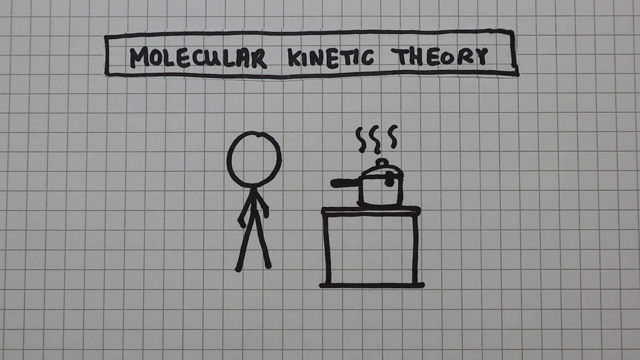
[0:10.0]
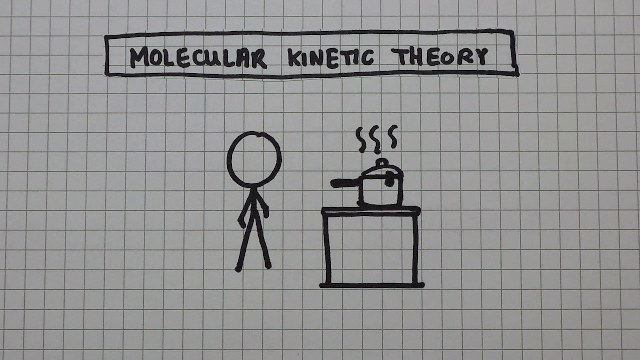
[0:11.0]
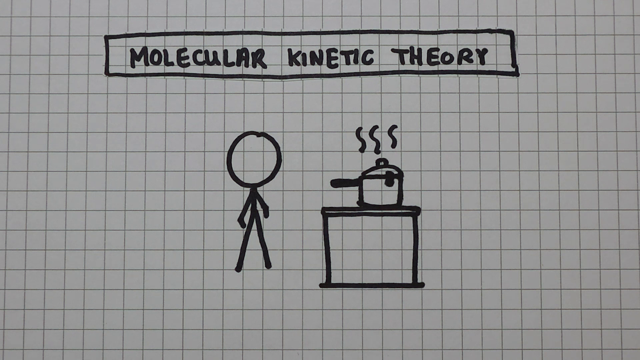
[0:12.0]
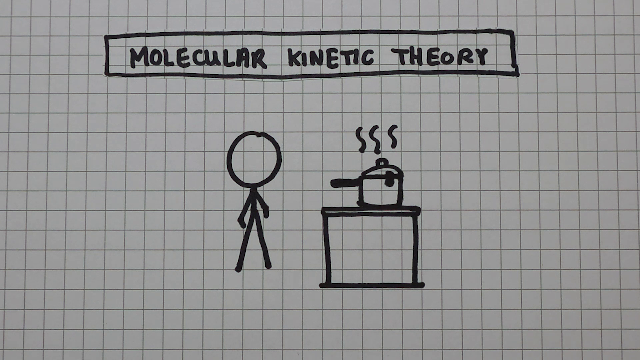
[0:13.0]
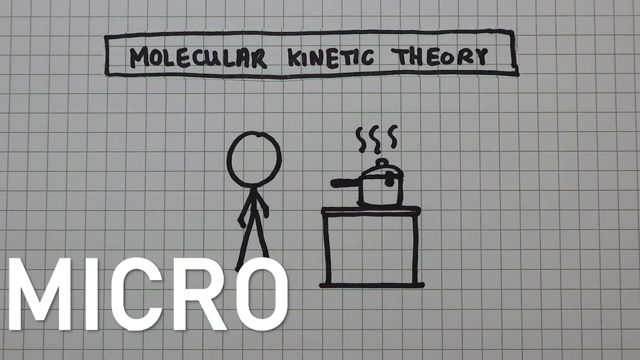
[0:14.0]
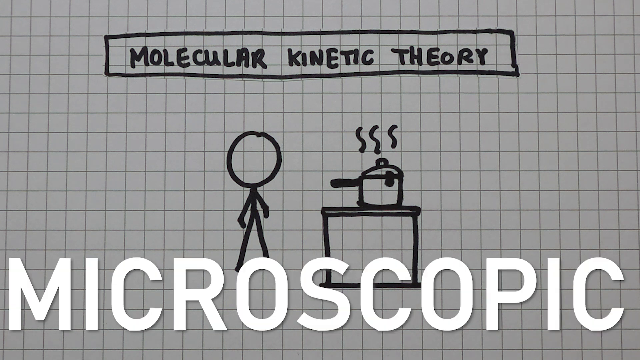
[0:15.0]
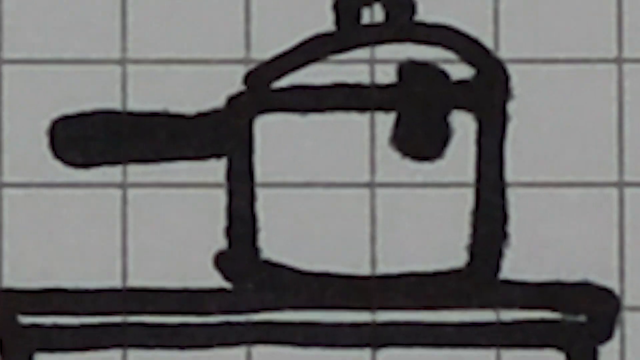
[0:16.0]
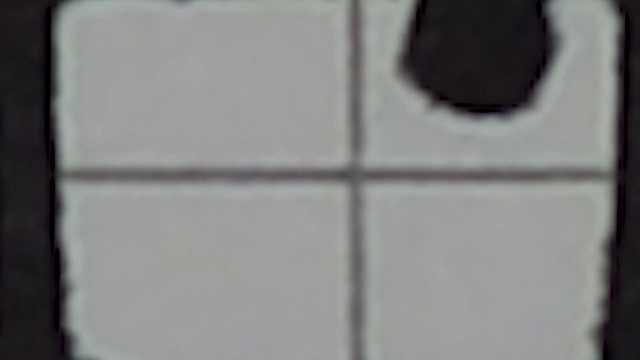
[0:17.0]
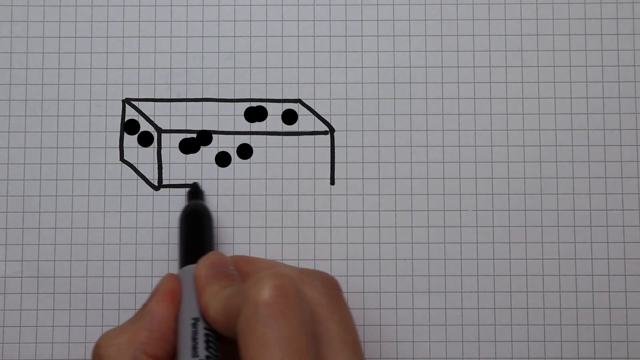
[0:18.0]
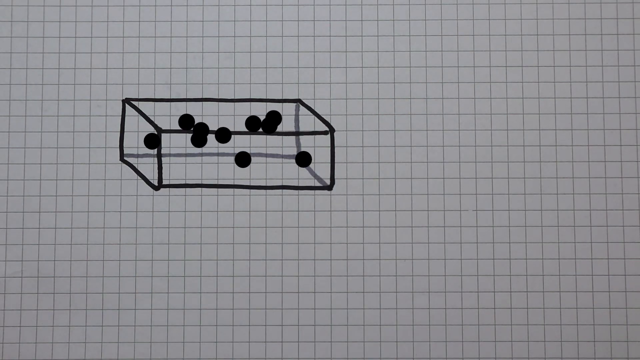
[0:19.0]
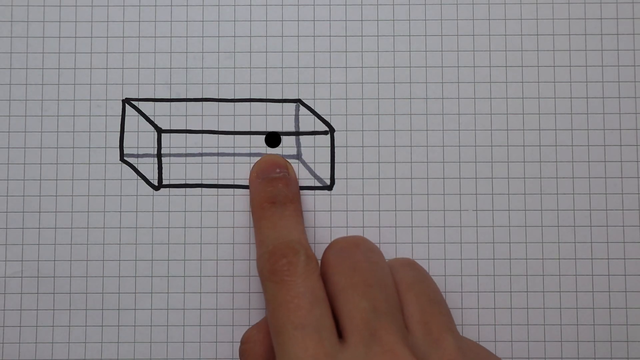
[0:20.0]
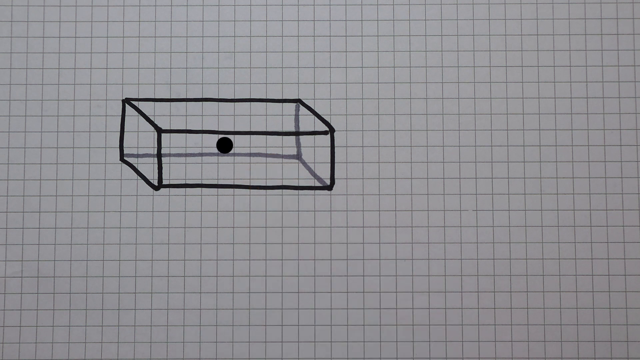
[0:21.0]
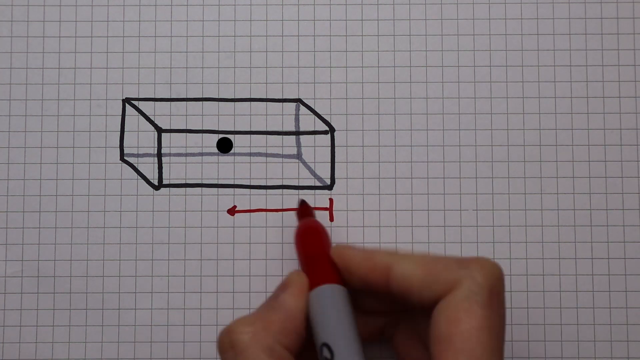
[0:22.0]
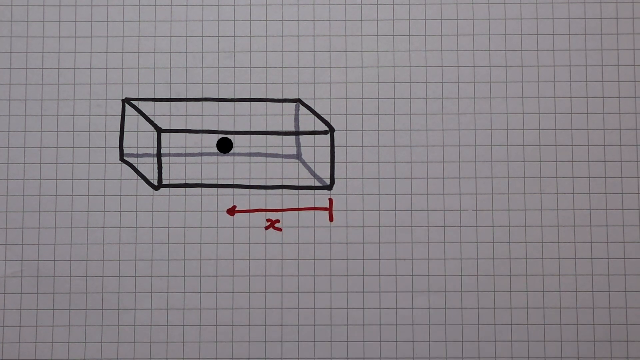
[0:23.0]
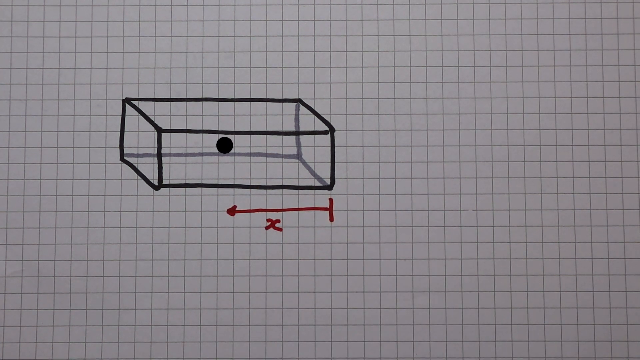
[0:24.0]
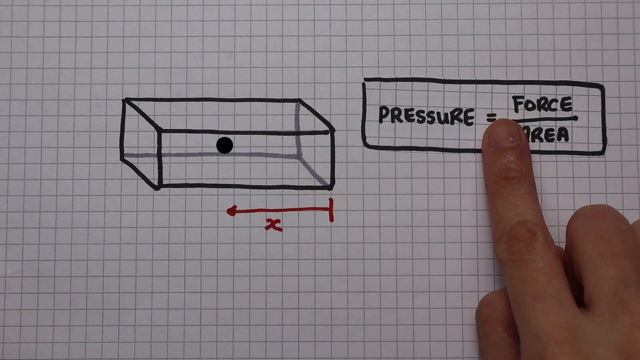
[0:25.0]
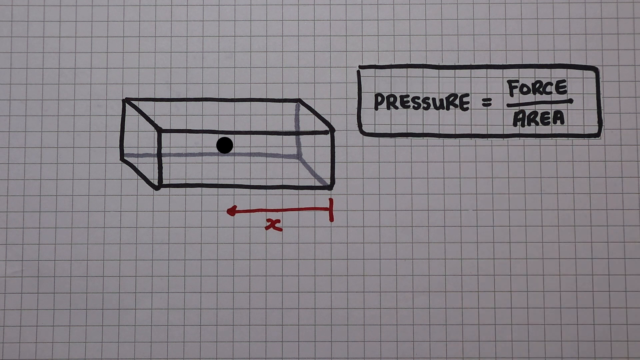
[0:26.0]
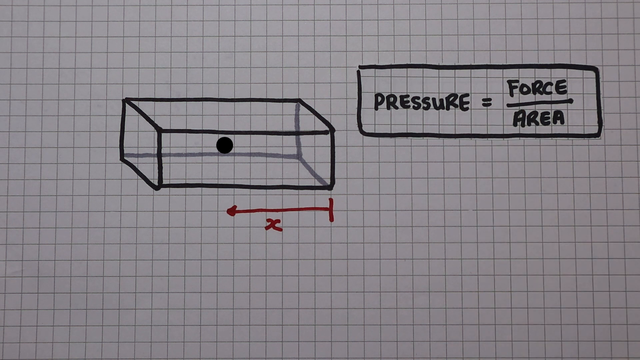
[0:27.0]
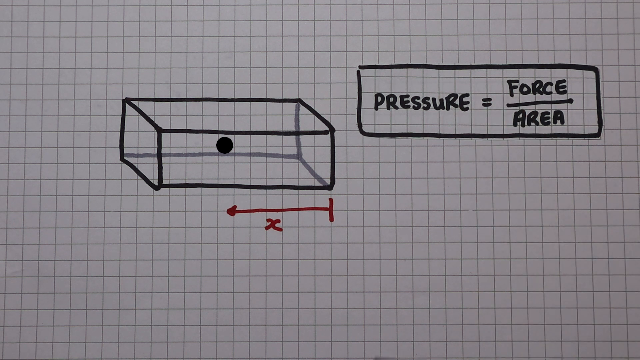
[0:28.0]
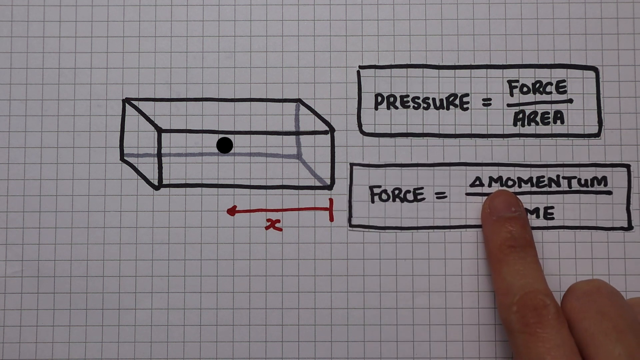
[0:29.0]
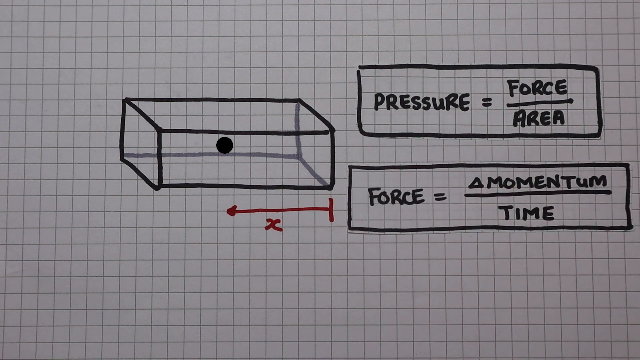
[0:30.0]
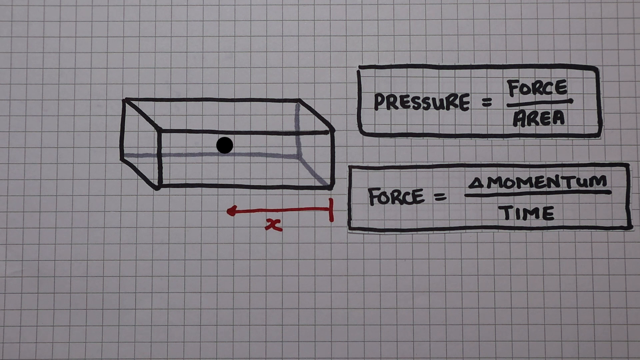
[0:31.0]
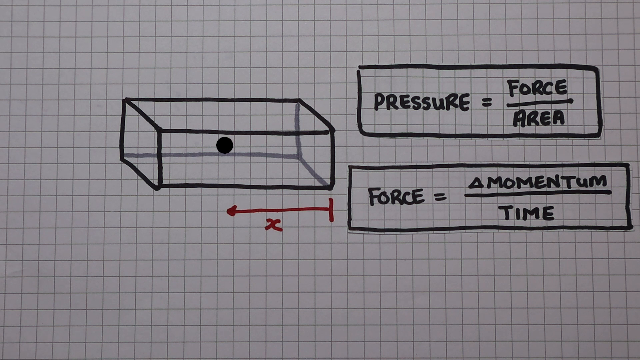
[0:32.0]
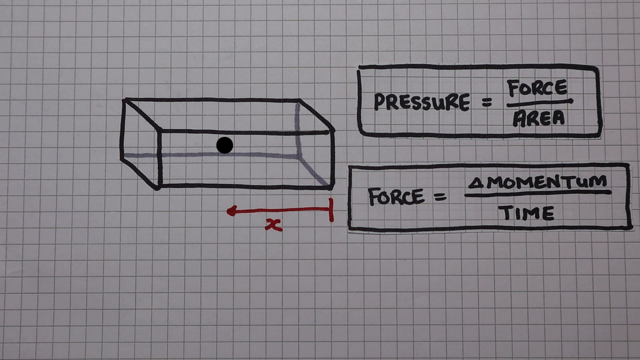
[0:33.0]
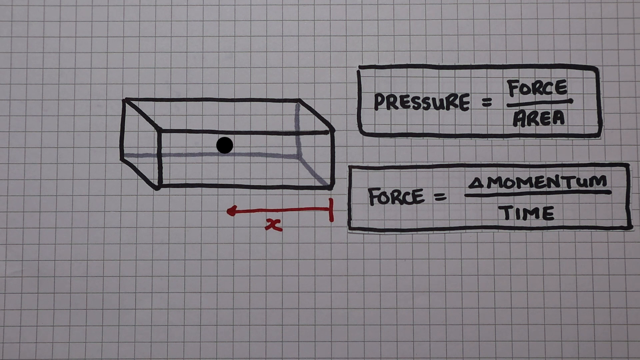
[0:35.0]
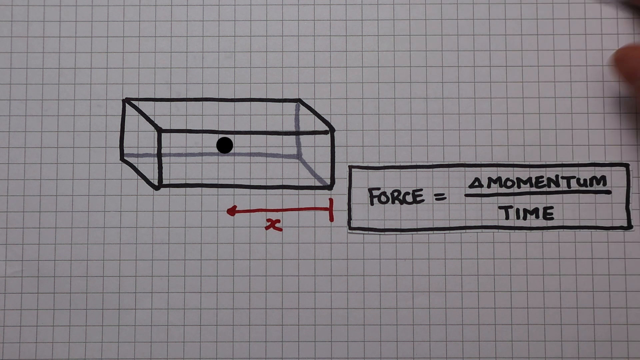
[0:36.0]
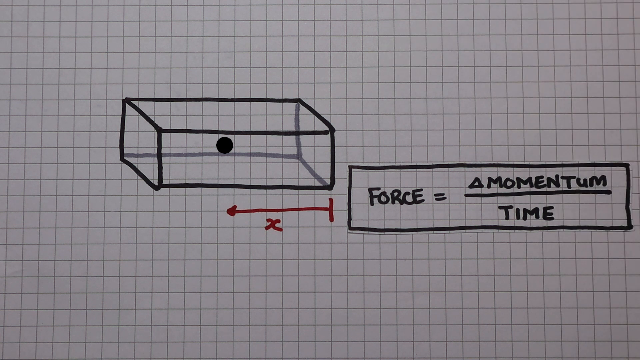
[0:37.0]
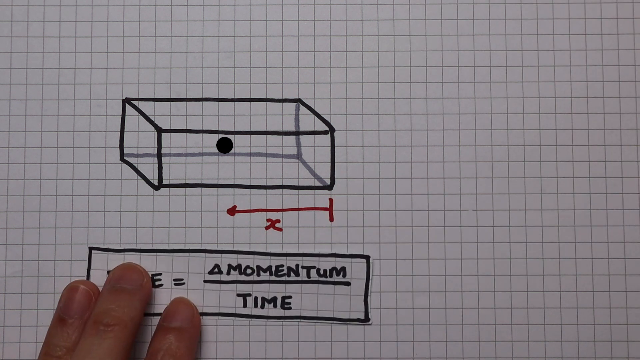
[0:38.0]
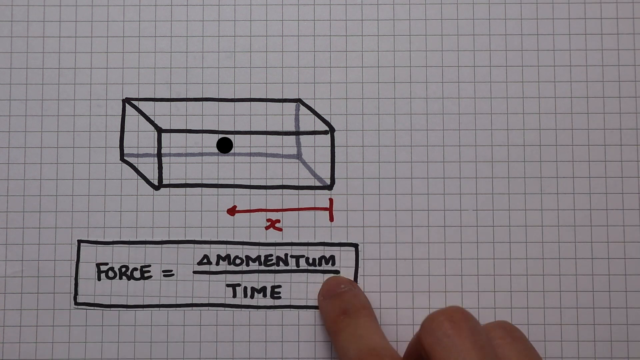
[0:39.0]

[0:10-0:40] Under the title about the molecular kinetic theory, the stick figure with the round head stands on the left. Slightly right of center is a square with a double line at the top, made of four lines connected at the corners. On top of it is another square, and on top of that a semicircle going from the left corner of the square to the right corner. A tiny red rectangular area connects the semicircle to the square. Three squiggly lines go up from the top, and a handle comes up from the left side of the pot. The view zooms in onto the square where the pot is, showing a hand-drawn box with many small circles bouncing around inside. The right index finger pushes on the box. The view goes down to one circle, and a red line is drawn underneath it: a small line under the right corner of the rectangle that goes straight across, with a triangle on the end and the letter x beneath. To the right, in a rectangular box, is "pressure equal force over area", and under it another box says "force equal a momentum over time". The hand moves each of these boxes: the top box is moved off the paper, and the bottom box is moved underneath the drawing of the stick figure and the pot with something boiling in it.